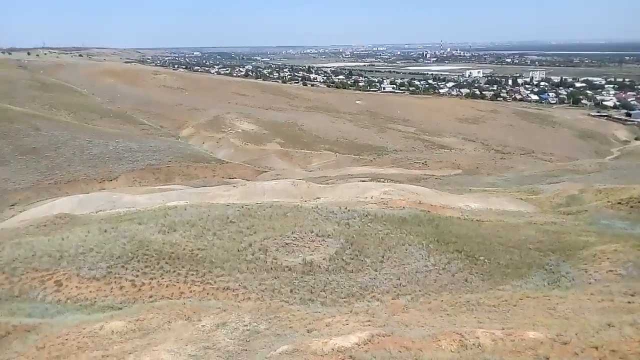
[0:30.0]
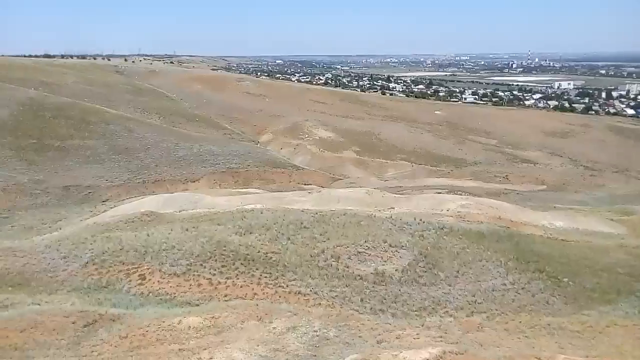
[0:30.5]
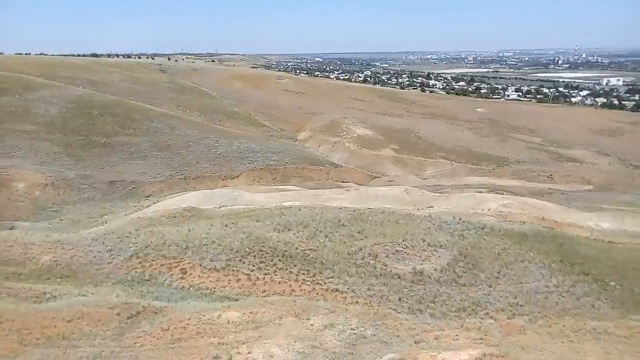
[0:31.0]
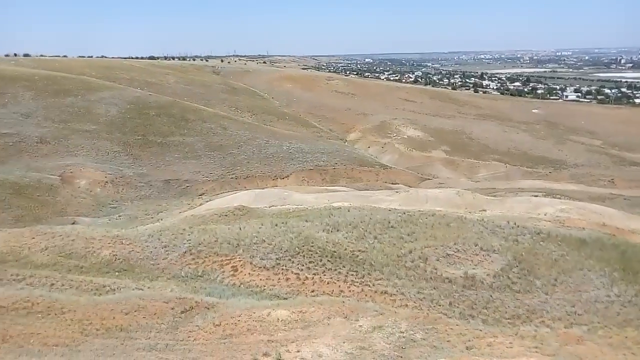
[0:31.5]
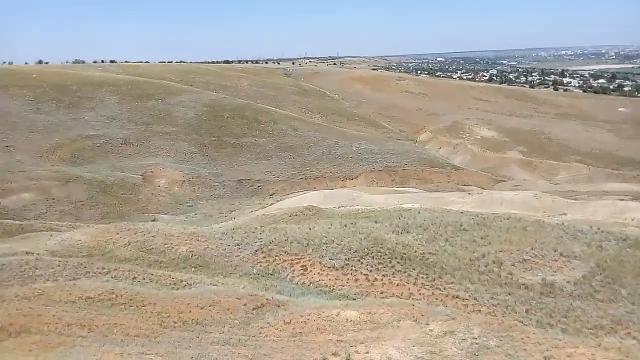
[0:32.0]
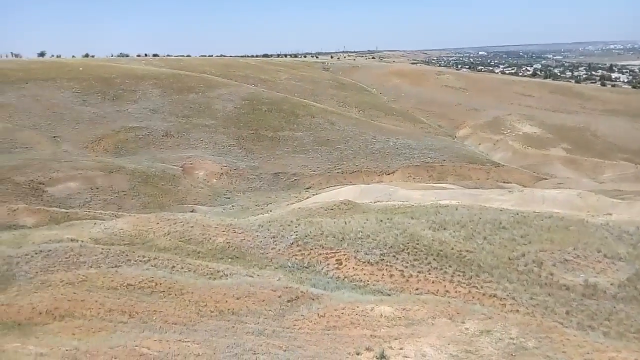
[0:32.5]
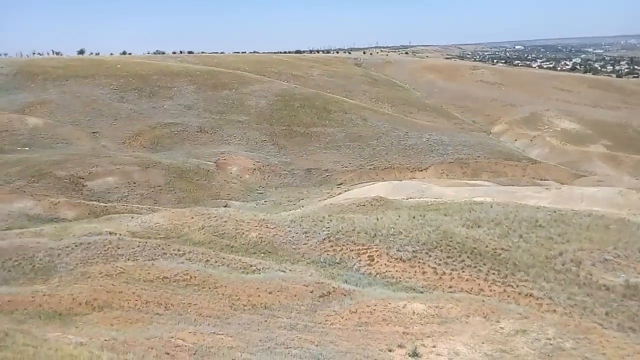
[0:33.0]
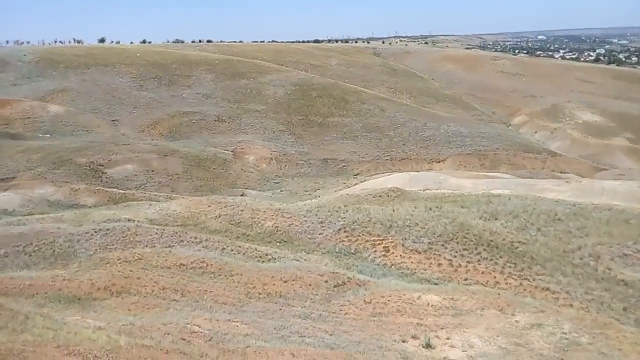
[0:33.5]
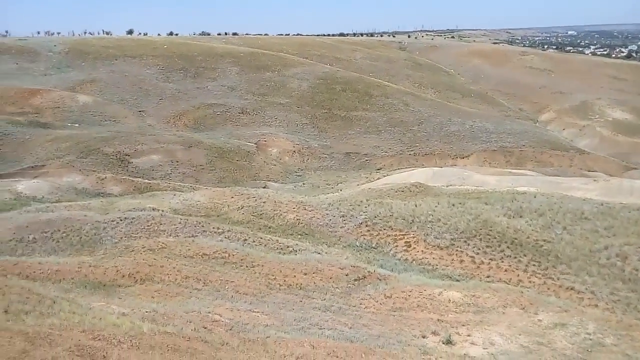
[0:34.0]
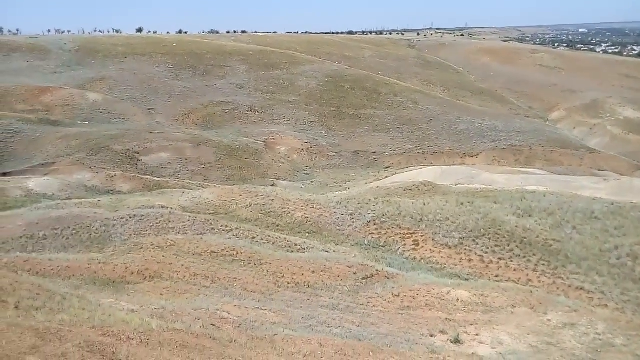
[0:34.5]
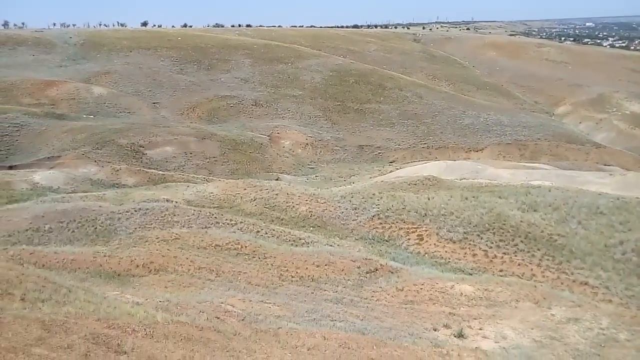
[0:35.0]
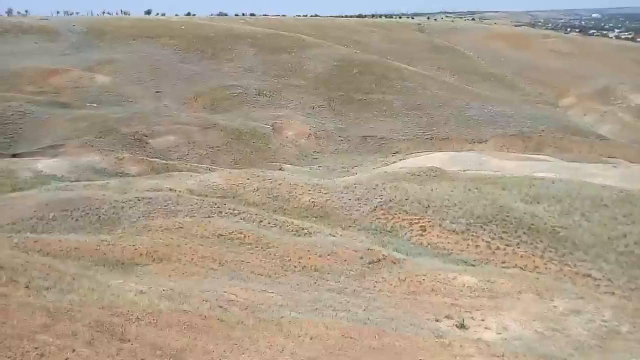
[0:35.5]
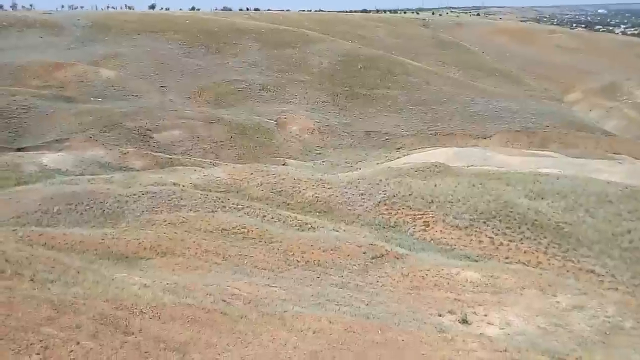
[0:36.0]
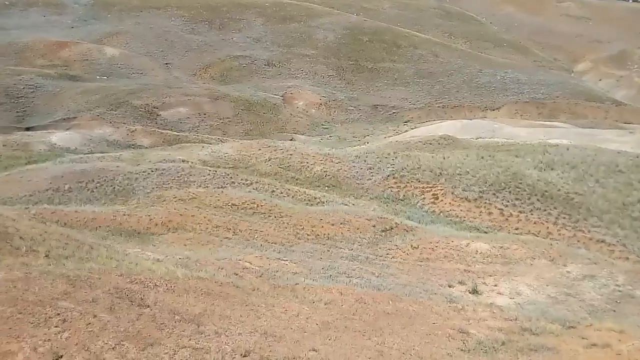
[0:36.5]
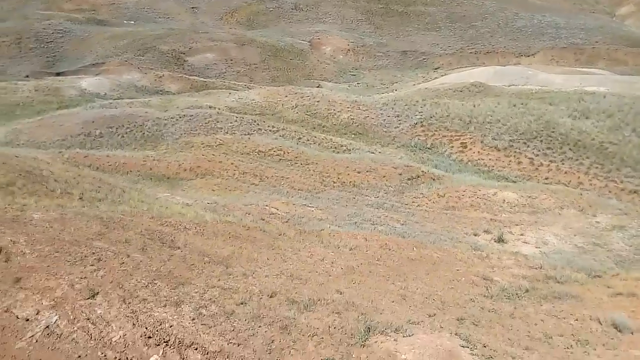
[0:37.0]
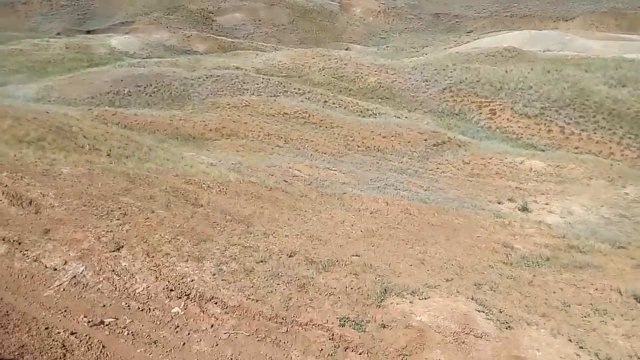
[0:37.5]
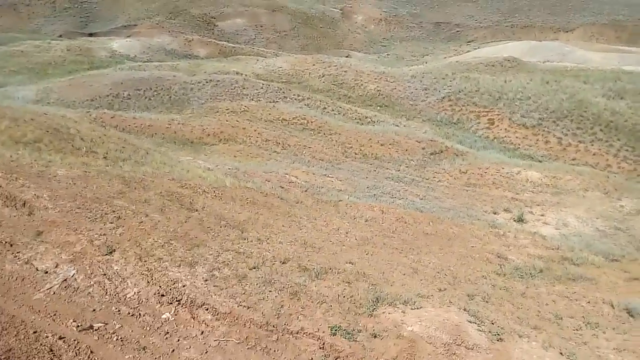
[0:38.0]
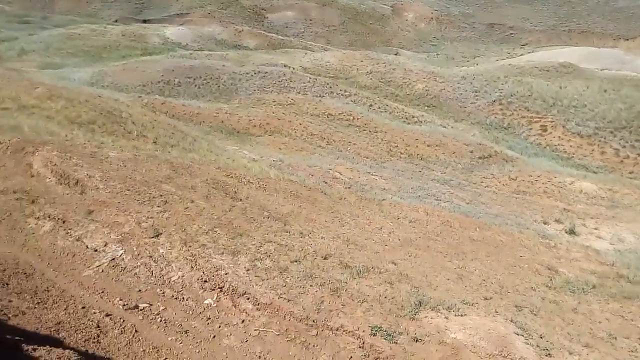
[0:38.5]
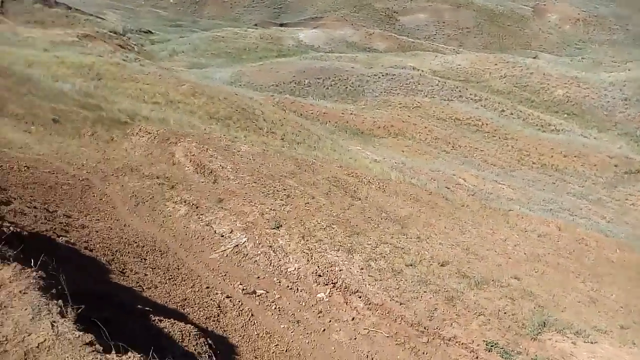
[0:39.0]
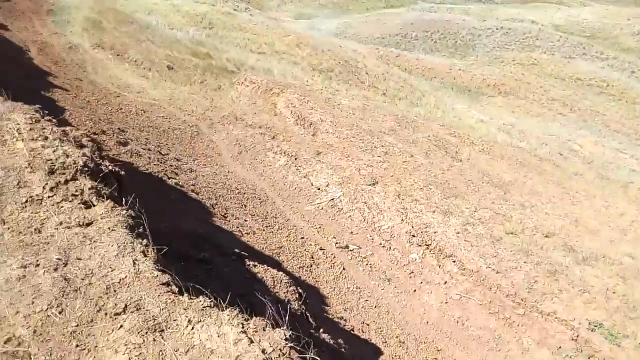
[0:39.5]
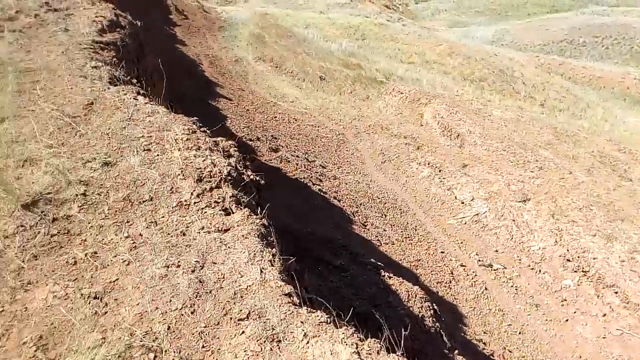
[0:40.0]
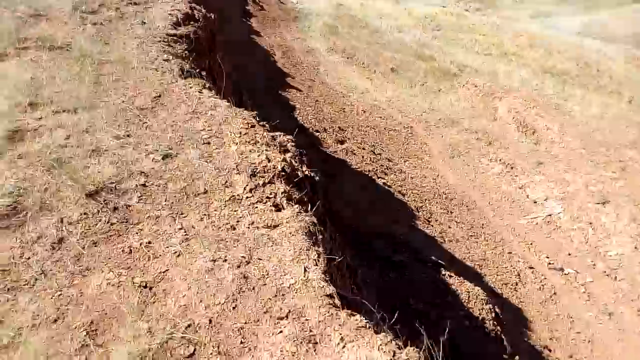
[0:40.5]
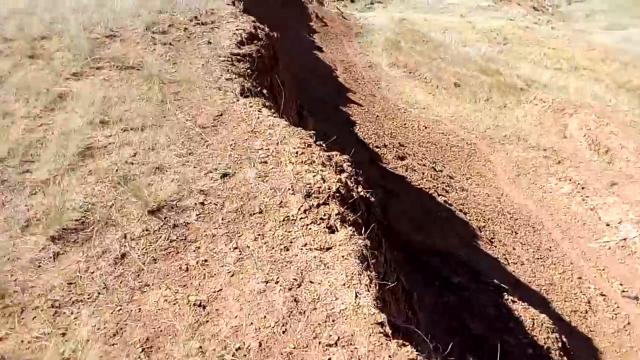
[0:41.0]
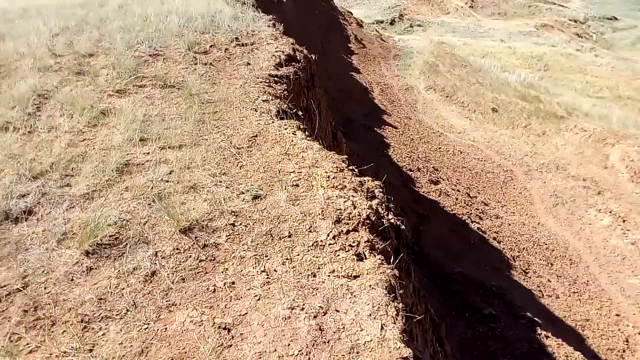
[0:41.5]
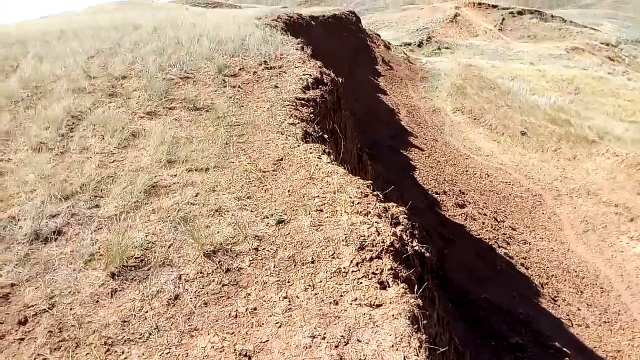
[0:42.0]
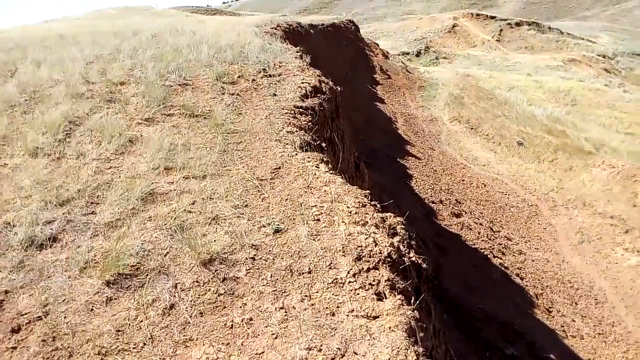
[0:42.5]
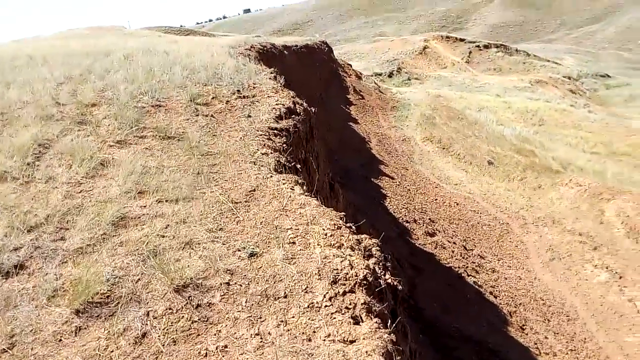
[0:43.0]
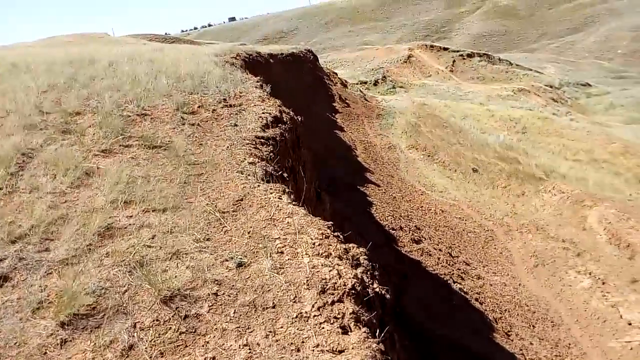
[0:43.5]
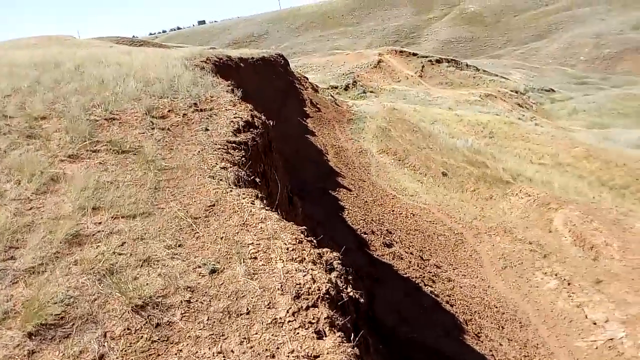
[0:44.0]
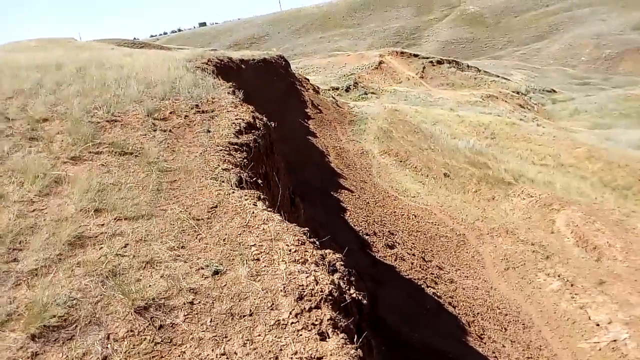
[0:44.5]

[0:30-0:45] The view looks out over a large area of land that may be an unincorporated area next to a city or neighborhood, or possibly intended to be a golf course. It looks like either fall or spring, as the grass is not vibrant and green and looks dead, dying or nonexistent. It is daylight but cloudy, and the sun isn't shining. No people or animals are visible, but houses, businesses and what appear to be vehicles can be made out in the background.